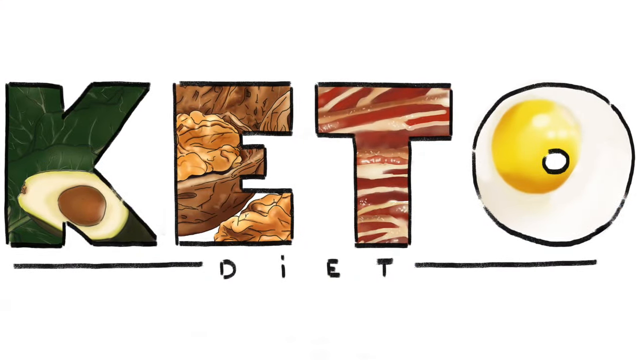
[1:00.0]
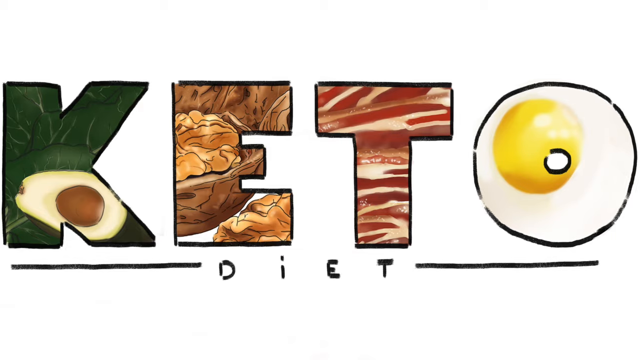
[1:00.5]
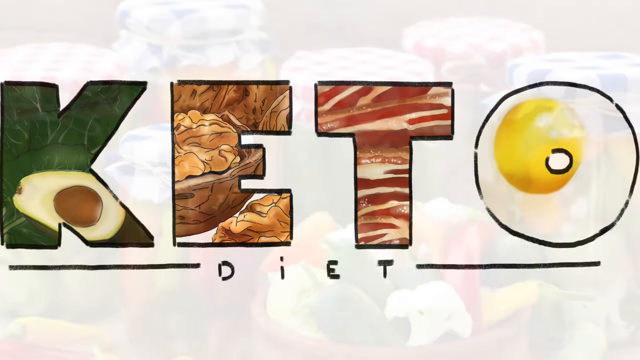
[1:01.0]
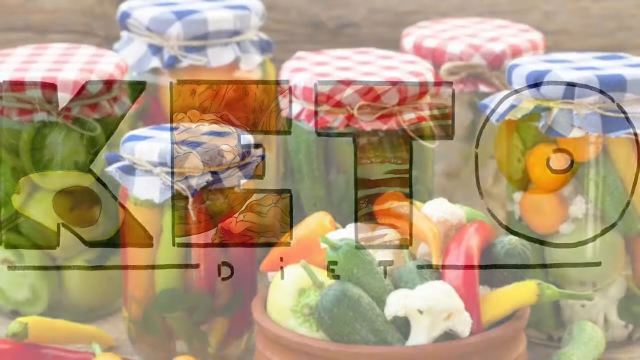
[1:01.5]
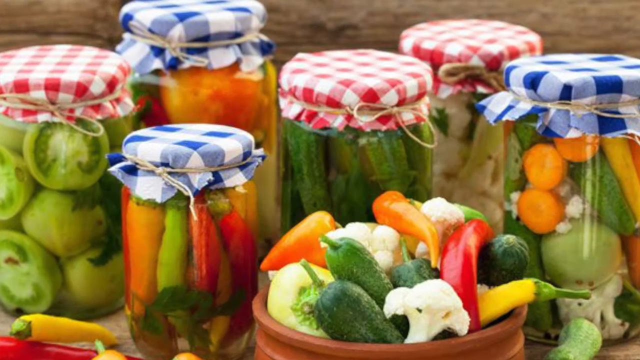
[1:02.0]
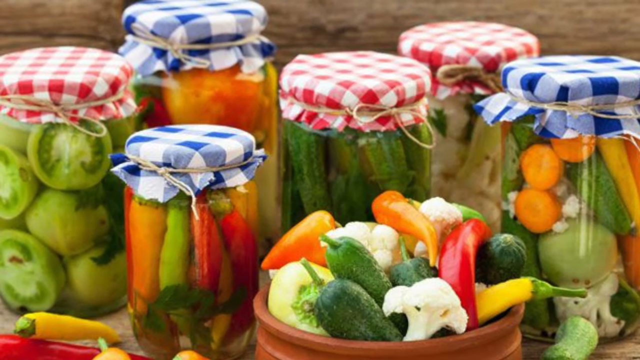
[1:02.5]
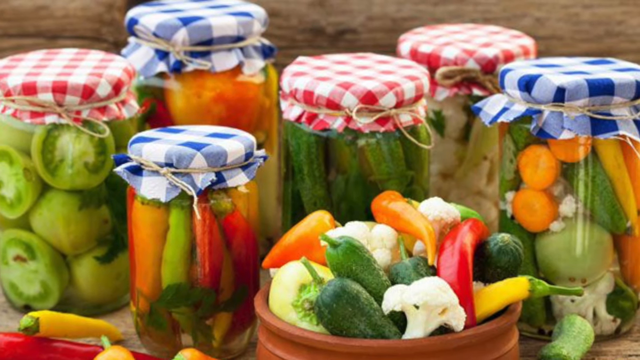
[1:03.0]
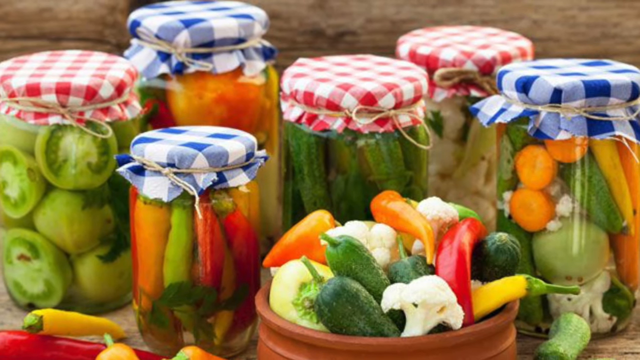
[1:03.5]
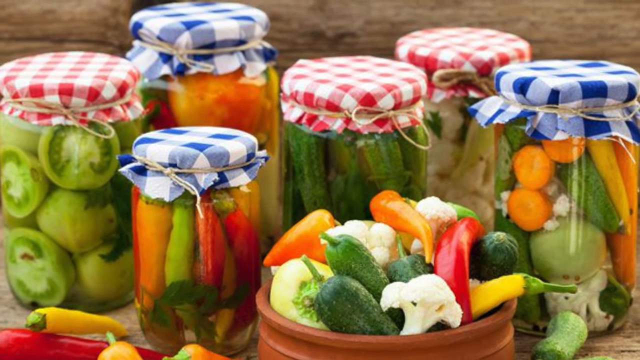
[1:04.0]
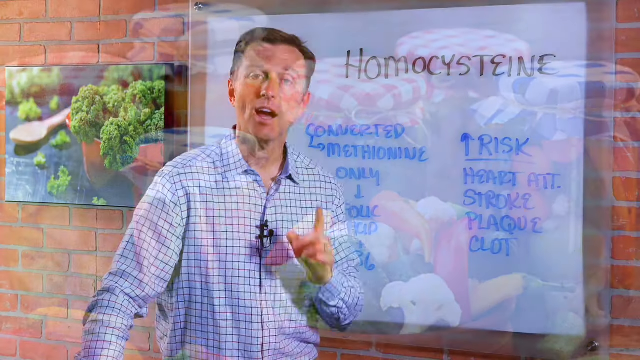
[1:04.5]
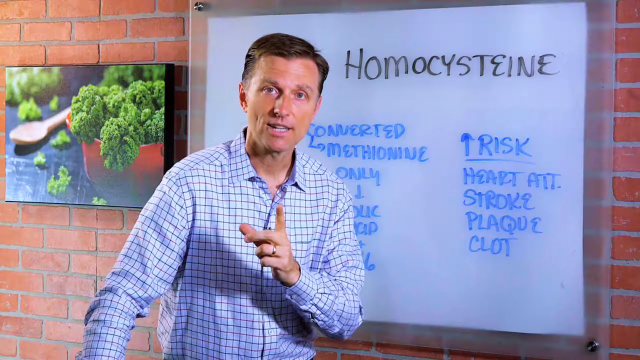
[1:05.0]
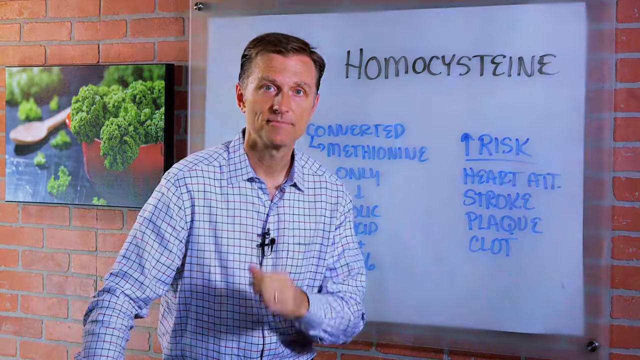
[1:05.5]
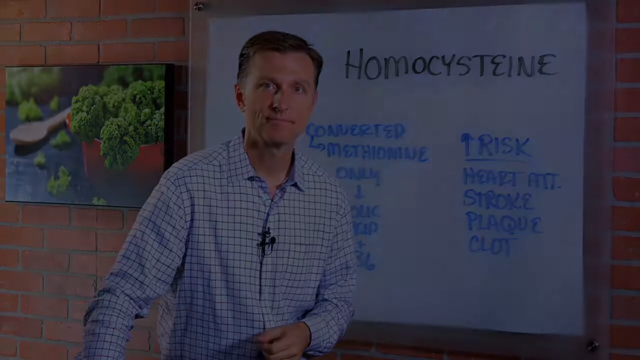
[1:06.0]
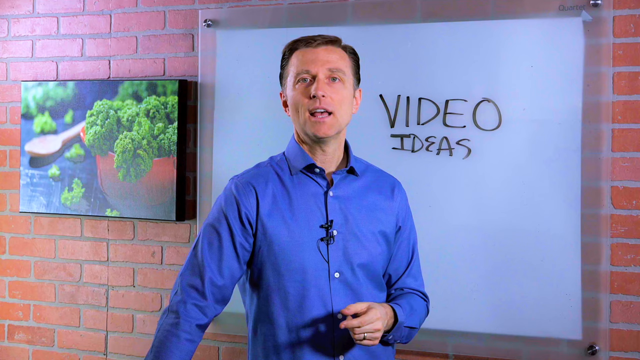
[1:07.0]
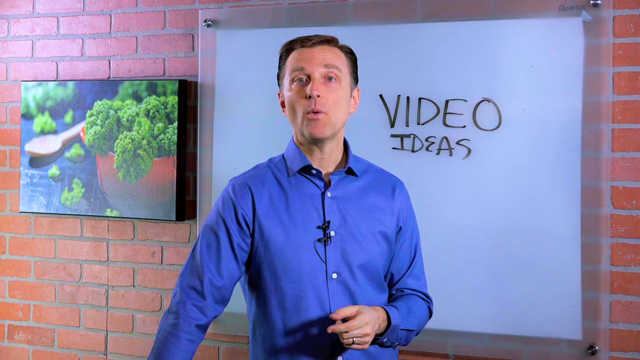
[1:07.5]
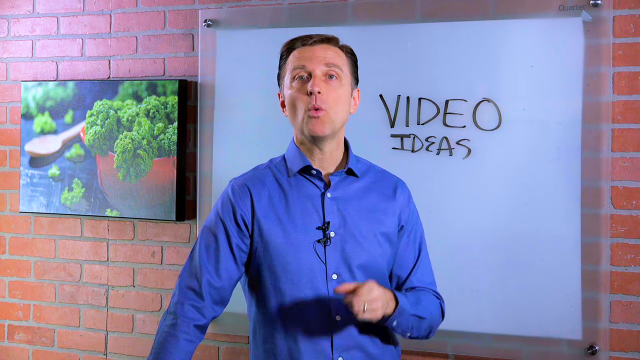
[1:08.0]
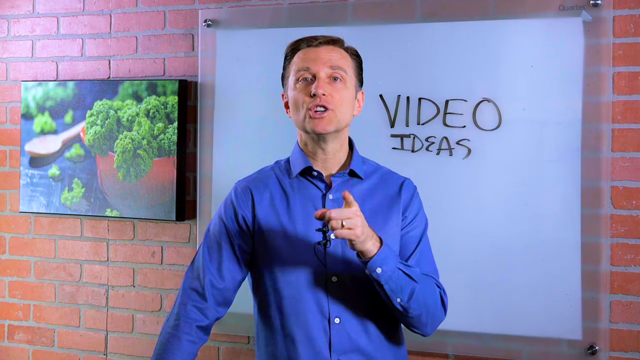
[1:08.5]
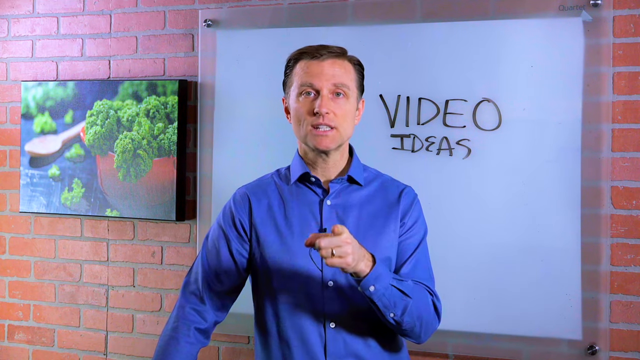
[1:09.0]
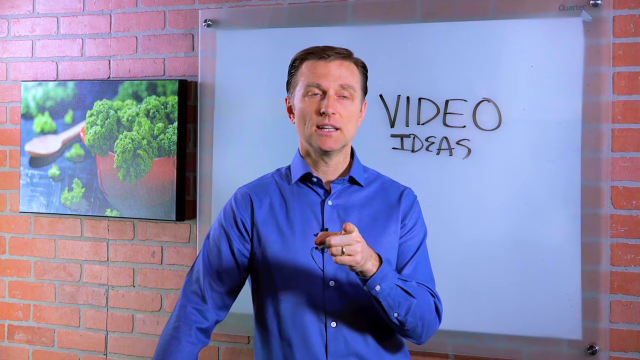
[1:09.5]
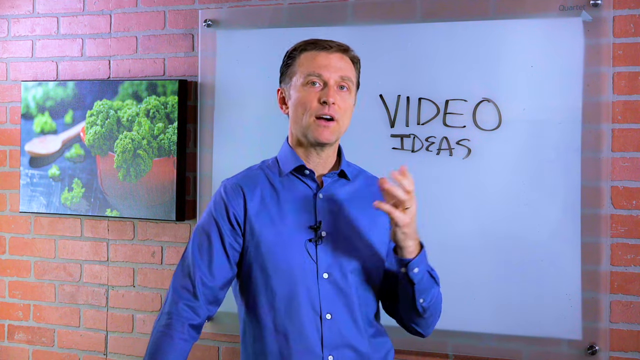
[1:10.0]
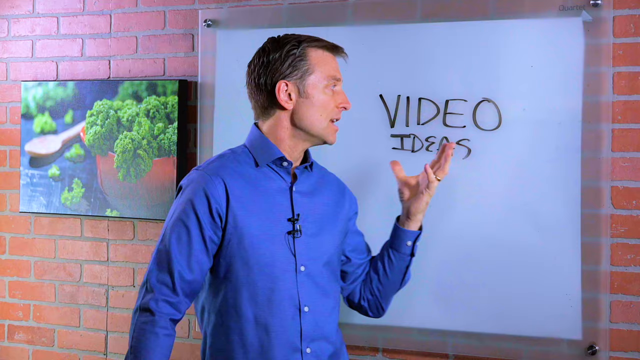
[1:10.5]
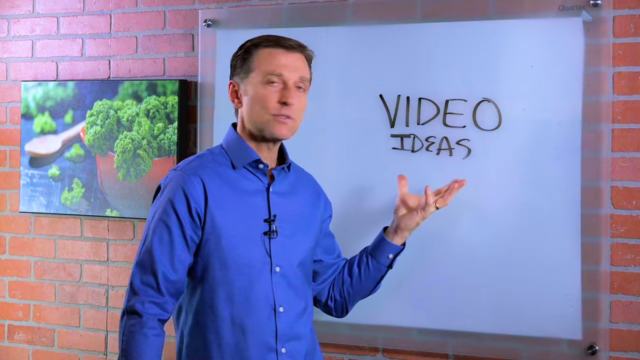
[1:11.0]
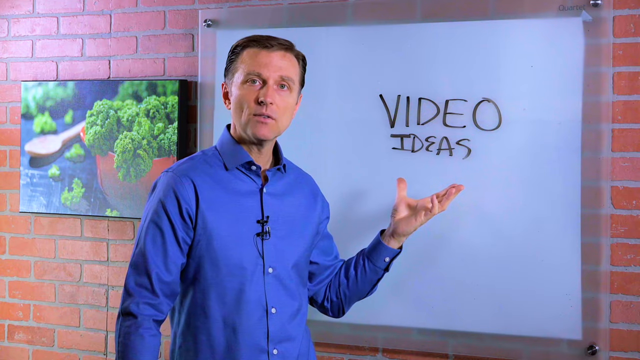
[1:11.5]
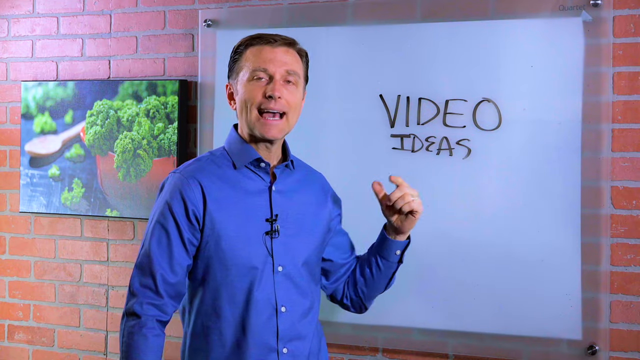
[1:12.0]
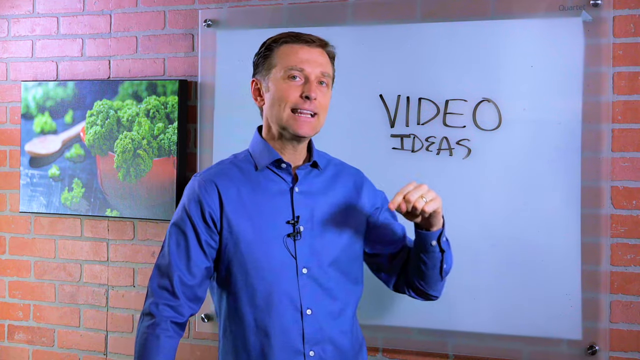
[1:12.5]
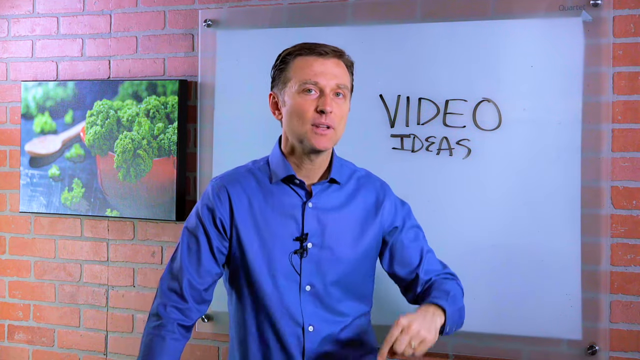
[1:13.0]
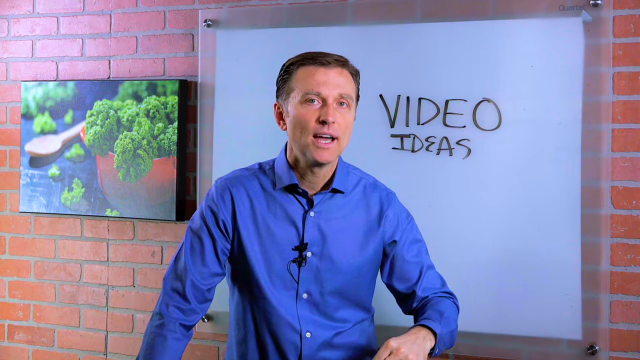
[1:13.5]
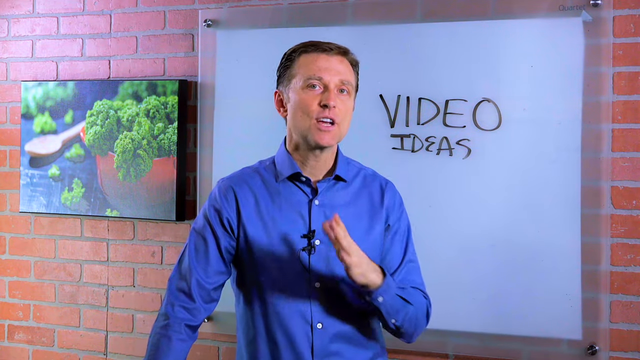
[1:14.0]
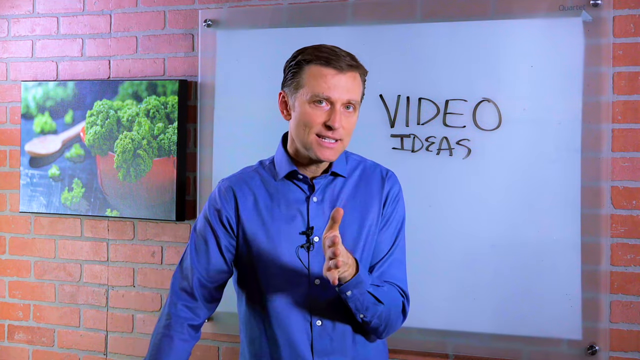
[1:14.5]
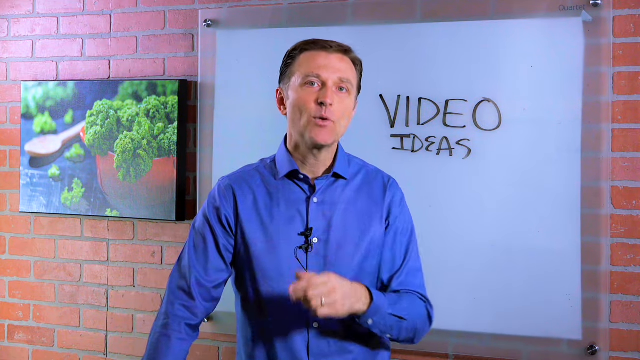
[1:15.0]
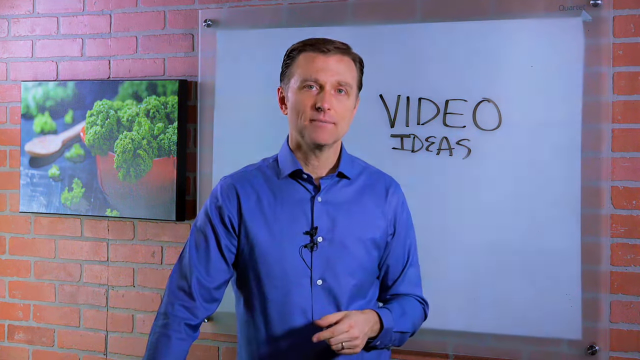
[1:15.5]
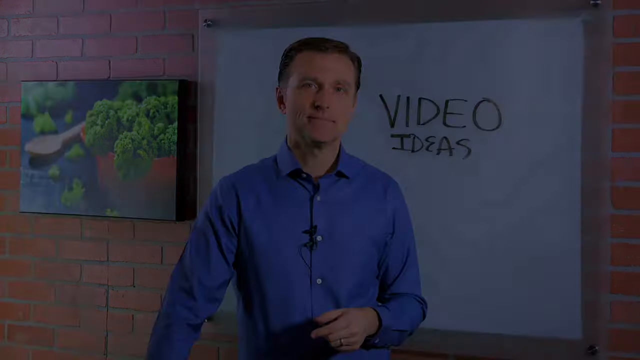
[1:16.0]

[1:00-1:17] The video appears to fade to a shot of foods, such as jars of vegetables with red and blue checkered tops. The video then cuts back to Dr. Berg, who is pointing at the screen. The screen fades to black, and lastly the video changes to Dr. Berg with the words "Video ideas" written on the whiteboard.